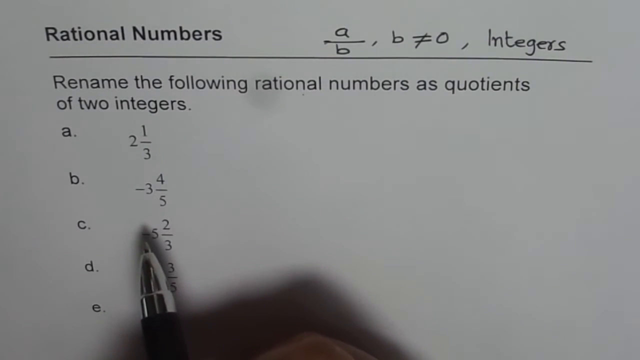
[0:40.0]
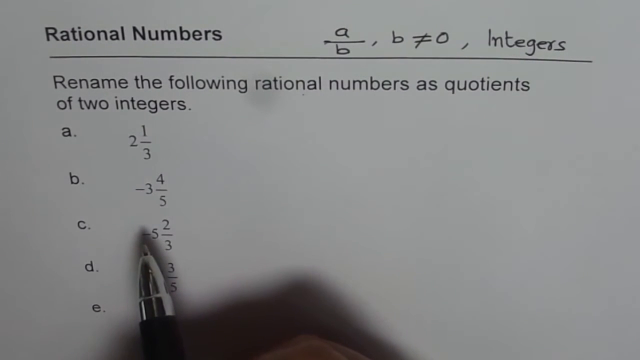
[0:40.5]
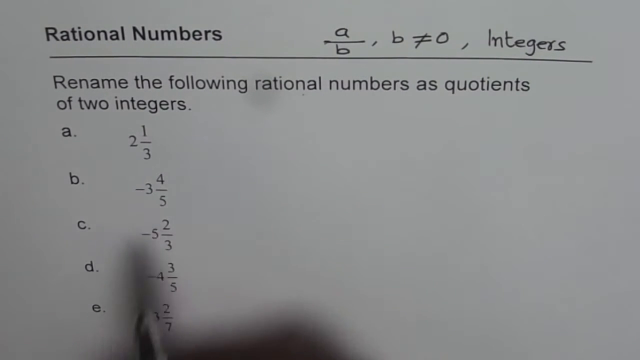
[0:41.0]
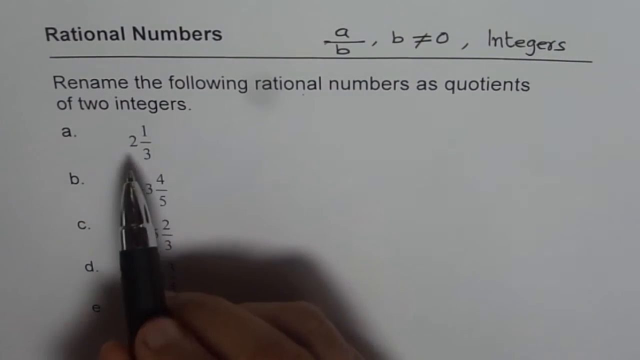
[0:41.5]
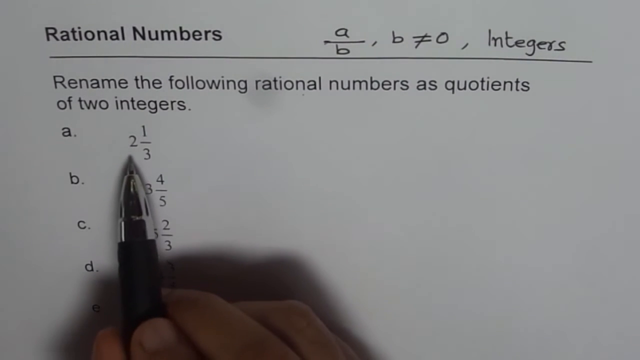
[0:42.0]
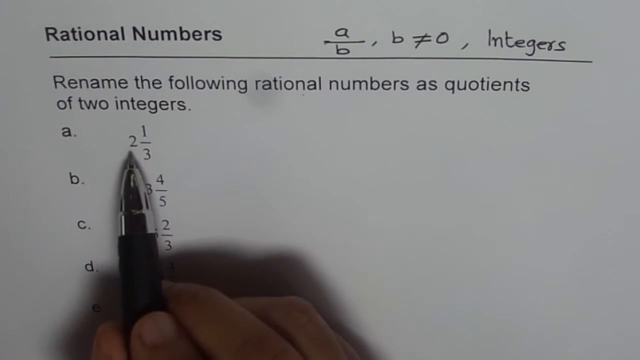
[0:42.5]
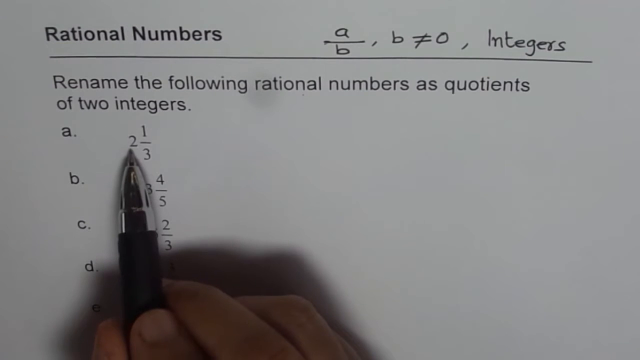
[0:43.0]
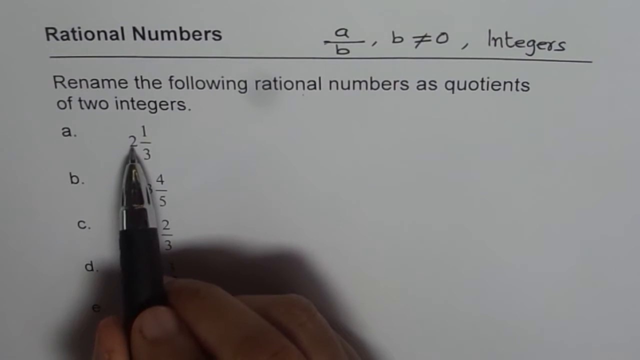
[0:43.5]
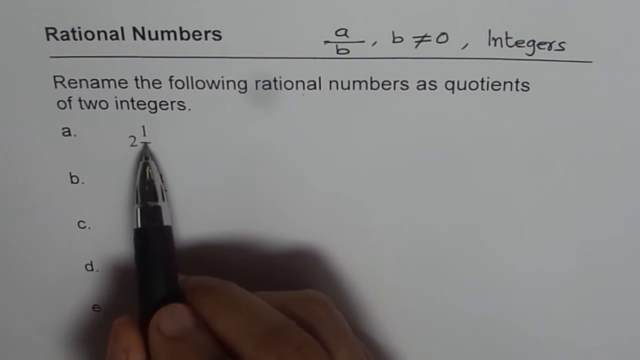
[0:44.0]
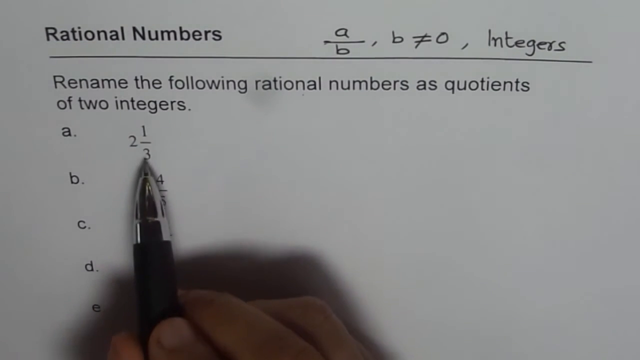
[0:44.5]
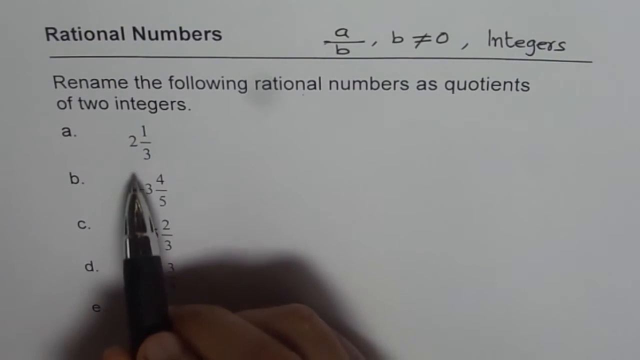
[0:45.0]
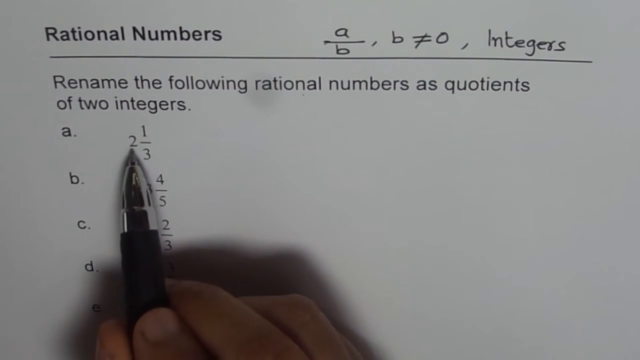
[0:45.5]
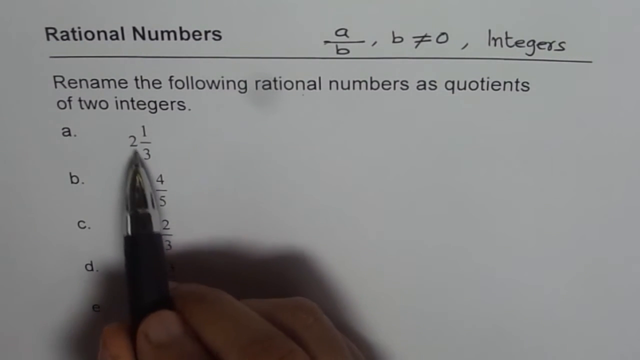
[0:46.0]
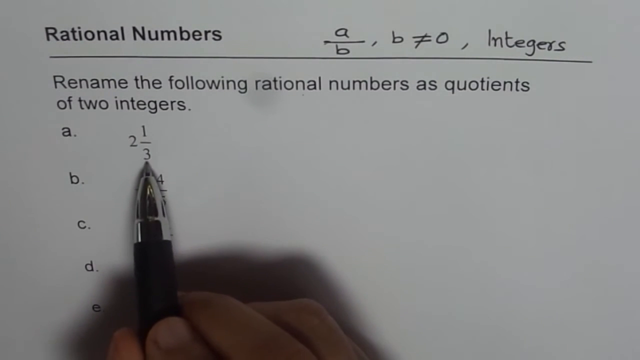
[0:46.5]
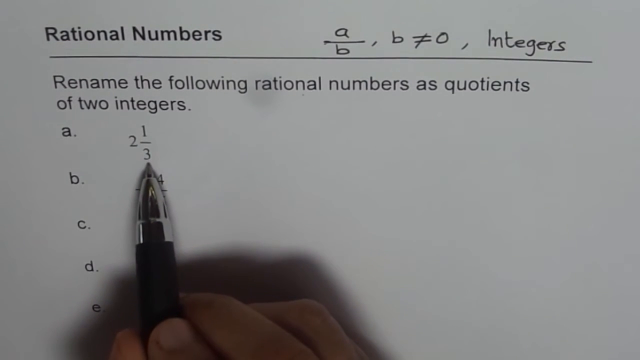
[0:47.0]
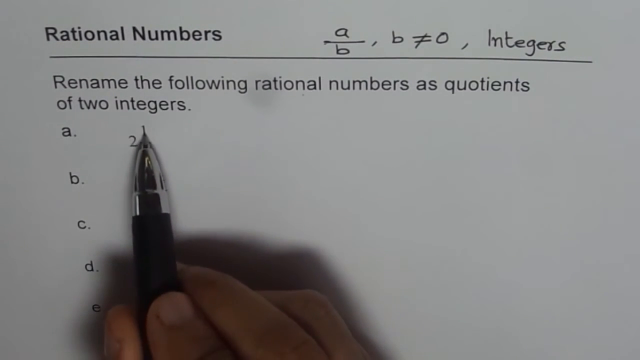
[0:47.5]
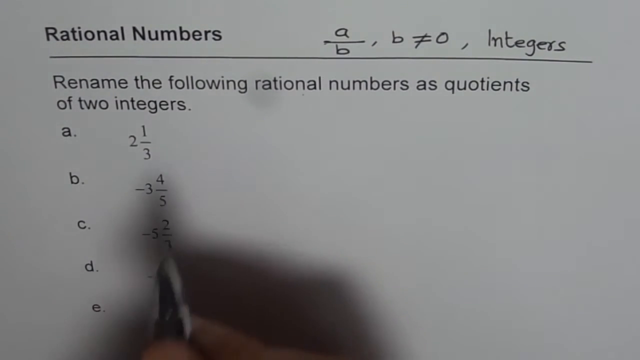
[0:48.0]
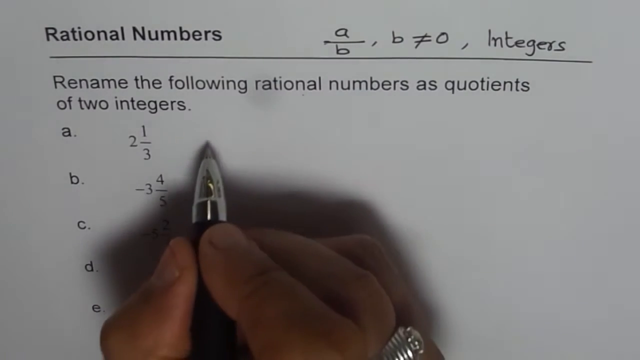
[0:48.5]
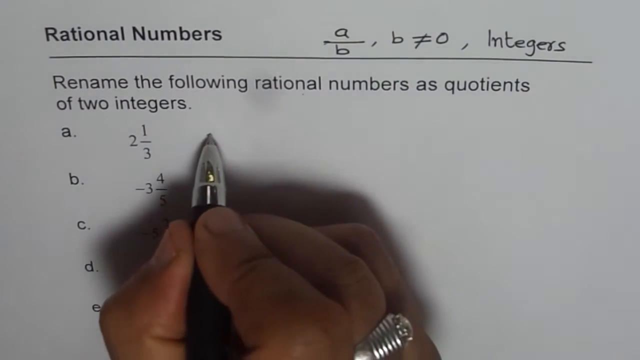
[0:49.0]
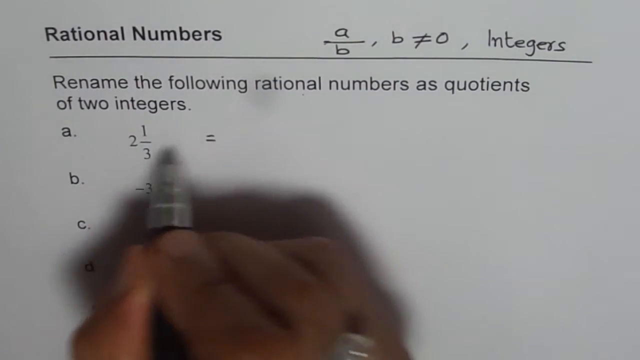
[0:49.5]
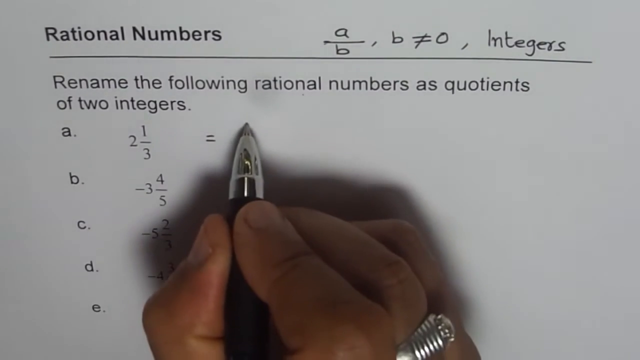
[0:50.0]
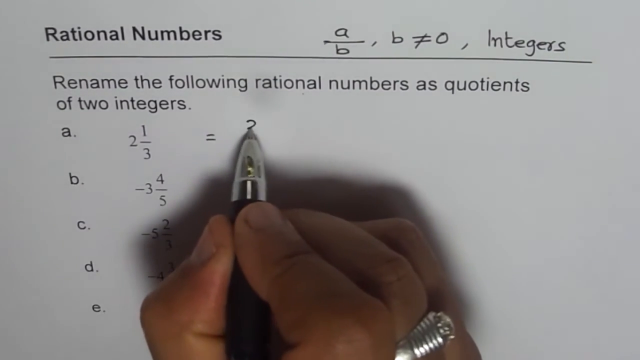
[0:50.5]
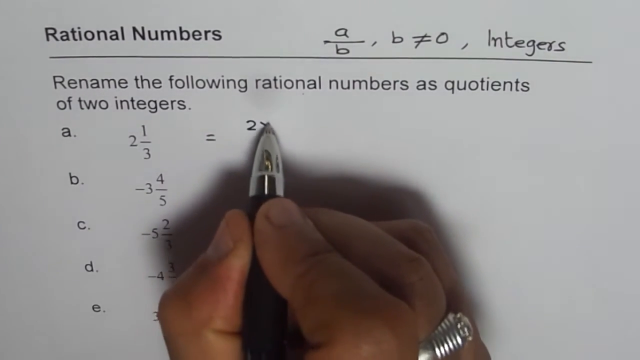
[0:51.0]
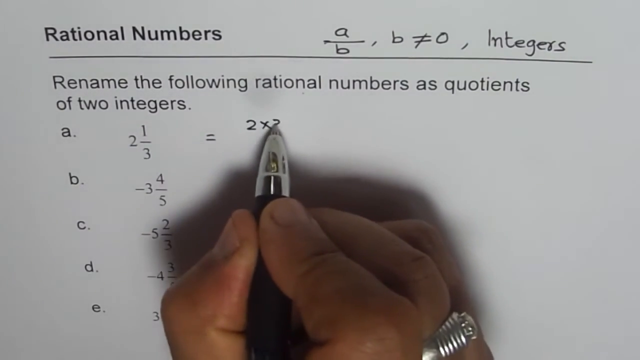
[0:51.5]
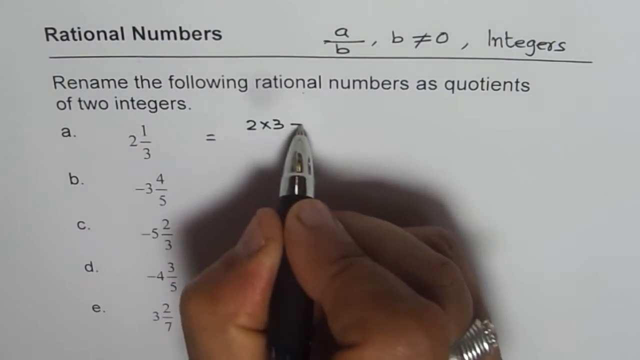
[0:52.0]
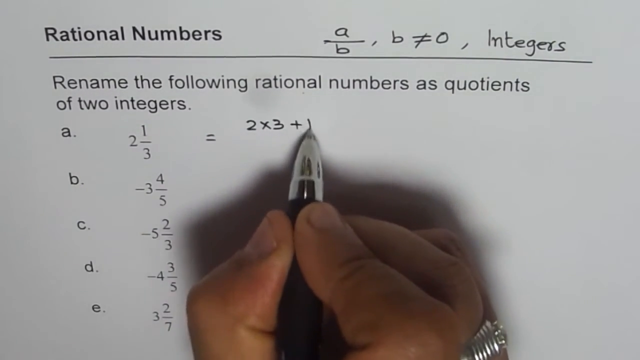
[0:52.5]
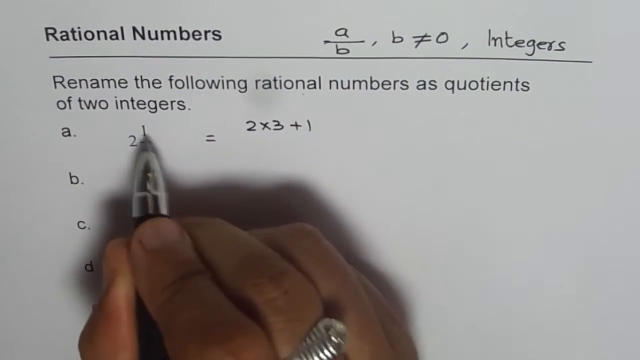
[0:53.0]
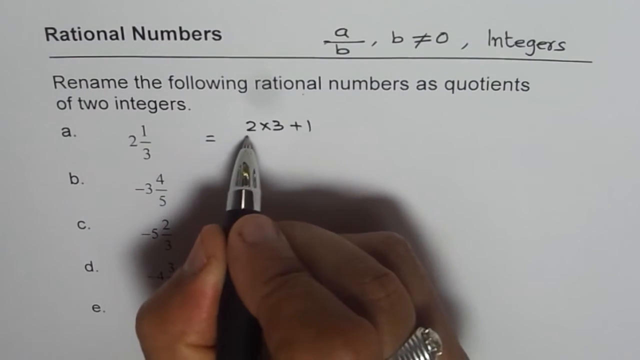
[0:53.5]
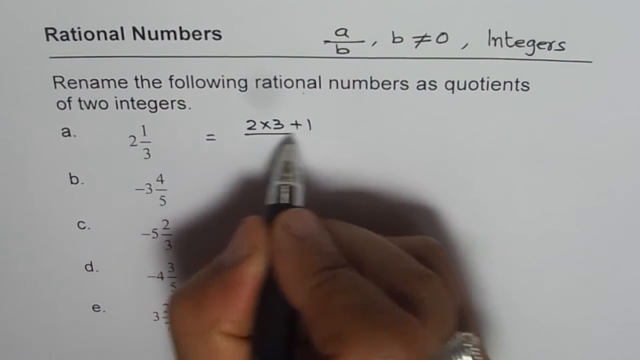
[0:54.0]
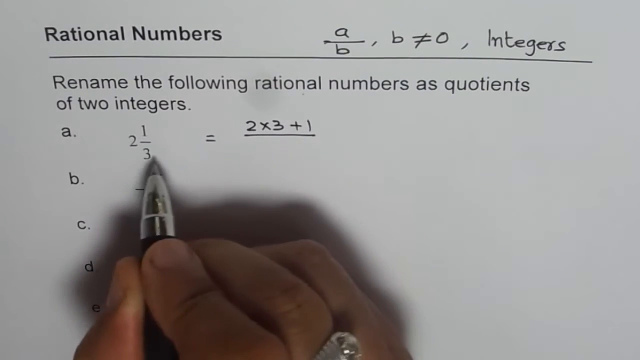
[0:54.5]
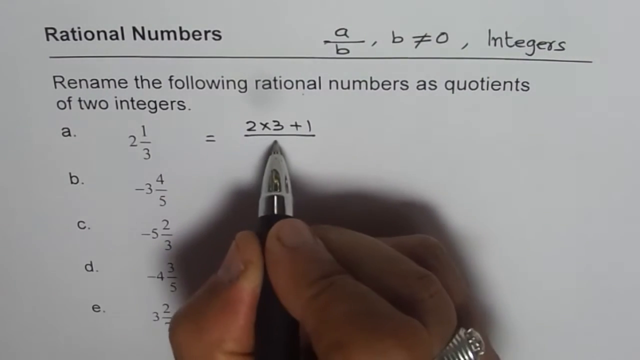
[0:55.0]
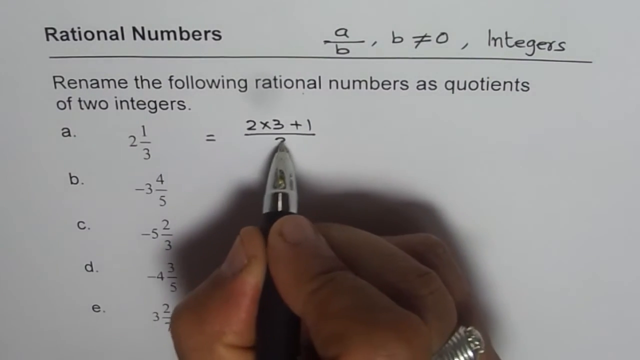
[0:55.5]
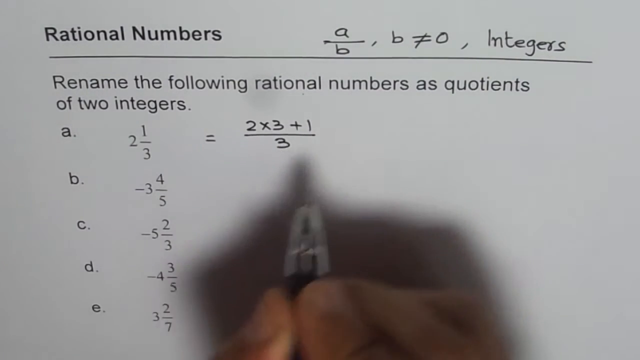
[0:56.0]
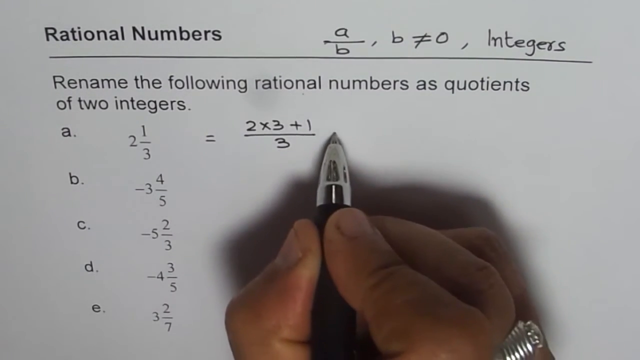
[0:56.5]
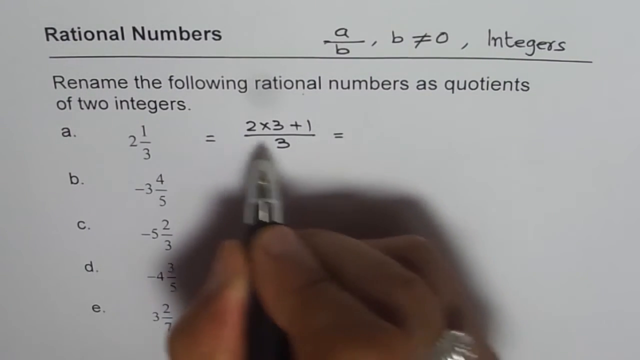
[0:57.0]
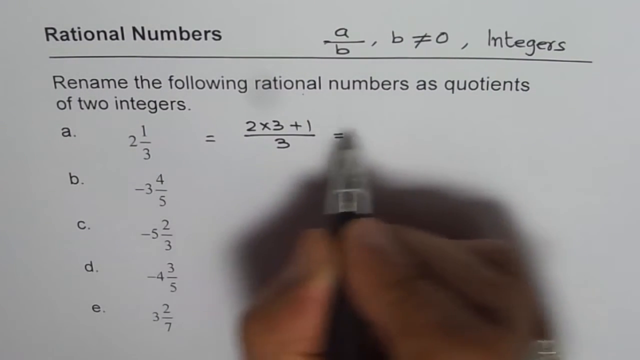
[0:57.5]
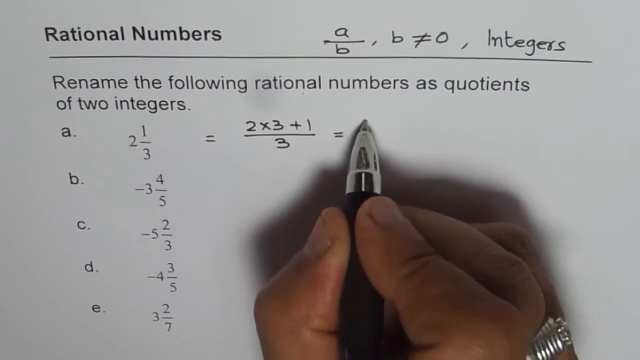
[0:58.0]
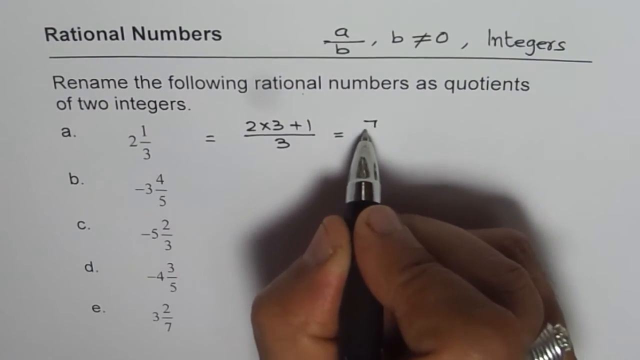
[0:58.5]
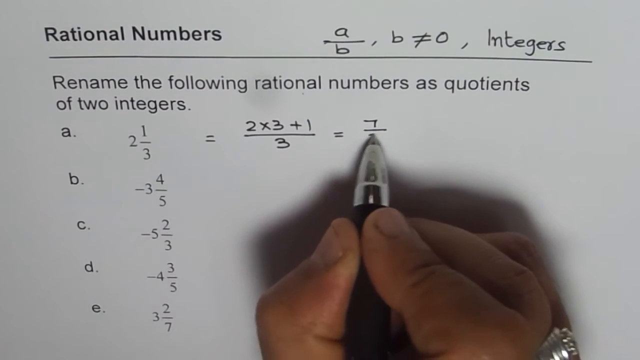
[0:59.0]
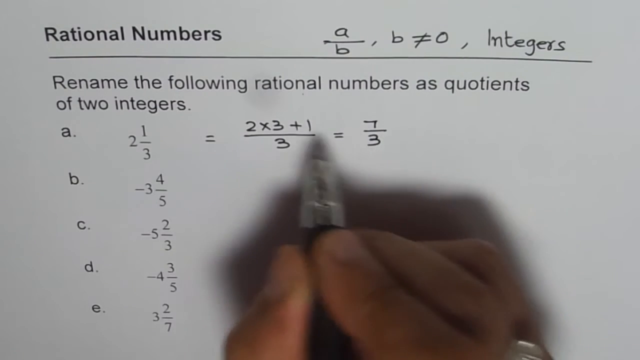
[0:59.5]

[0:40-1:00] The hand holding the black pen very briefly points to option C, then returns to option A and points directly at the 2 and the 1/3. The hand then writes an equation about an inch to the right of option A: "= 2 × 3 + 1/3 = 7/3." While writing, the pen points back to the typed text of option A, seemingly to show where the numbers come from. The person appears to be breaking down option A to determine whether it could be the correct answer. The handwriting is clear, neat and feminine, in black ink from the same pen.